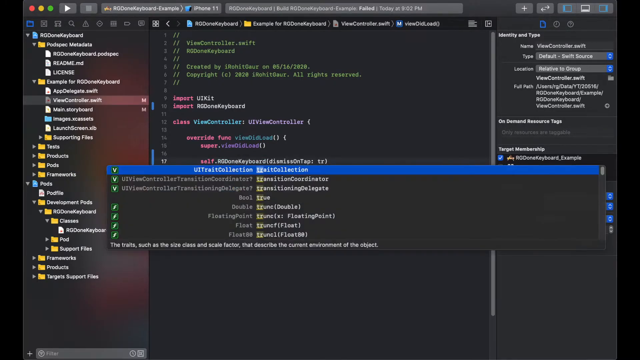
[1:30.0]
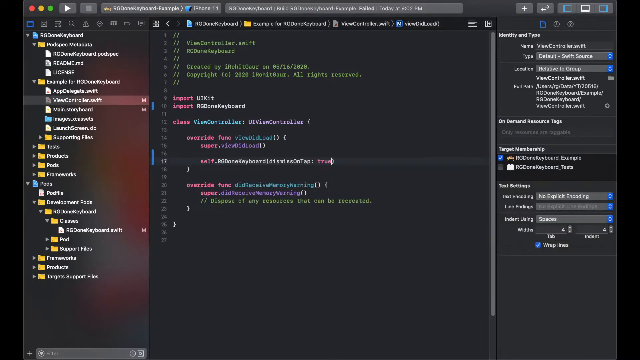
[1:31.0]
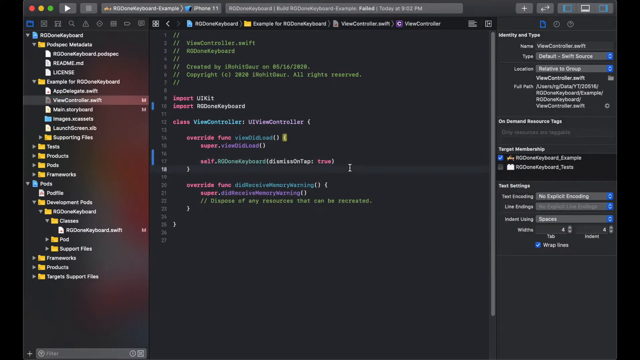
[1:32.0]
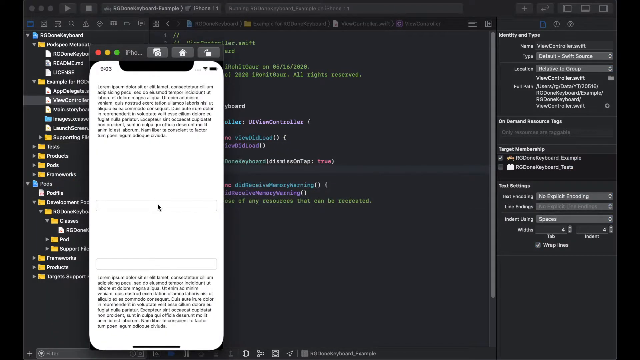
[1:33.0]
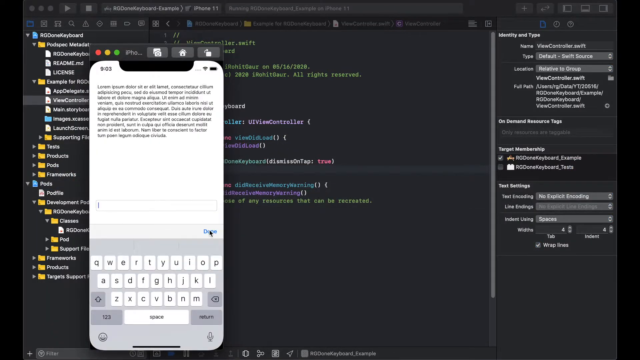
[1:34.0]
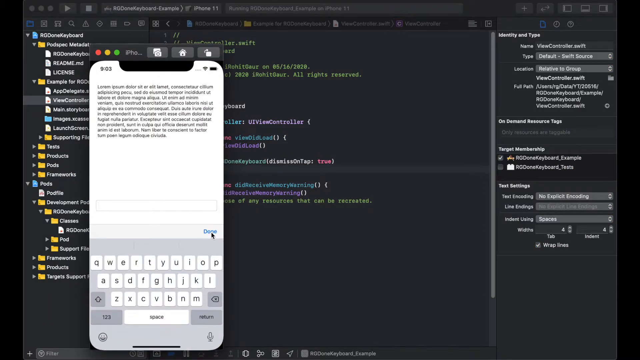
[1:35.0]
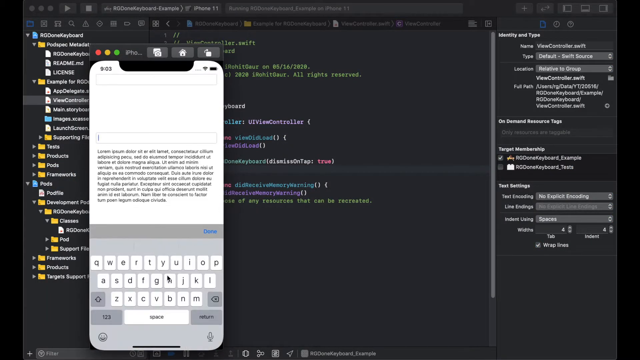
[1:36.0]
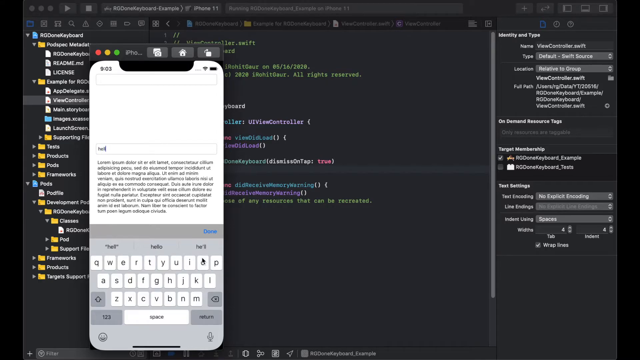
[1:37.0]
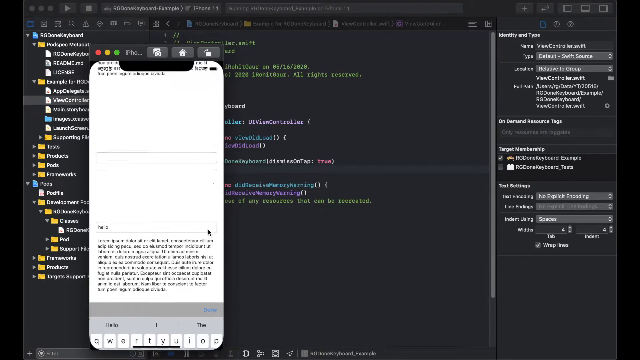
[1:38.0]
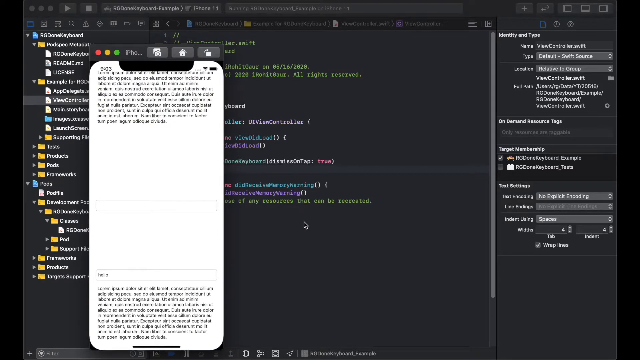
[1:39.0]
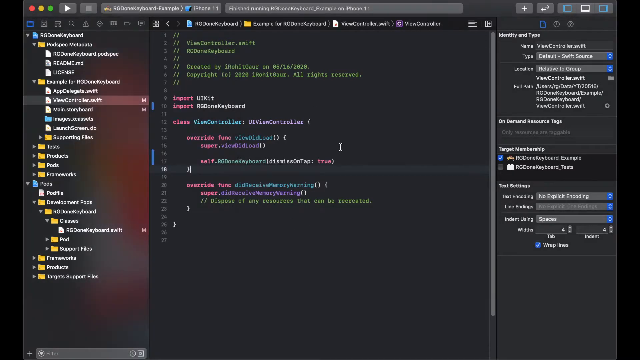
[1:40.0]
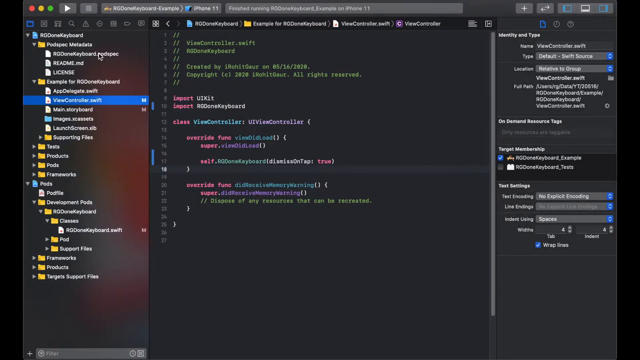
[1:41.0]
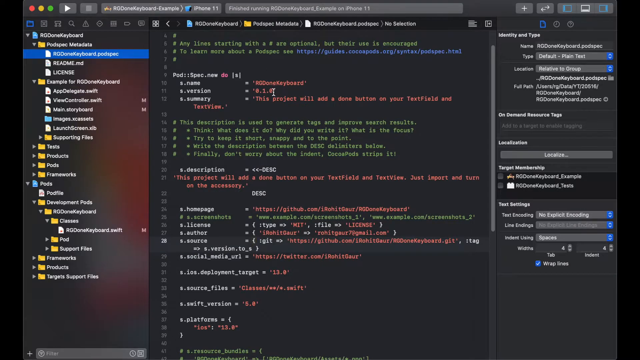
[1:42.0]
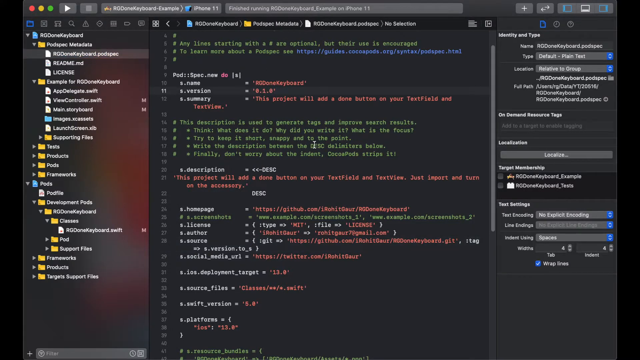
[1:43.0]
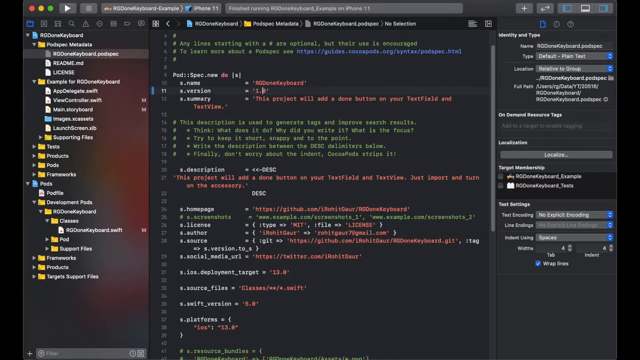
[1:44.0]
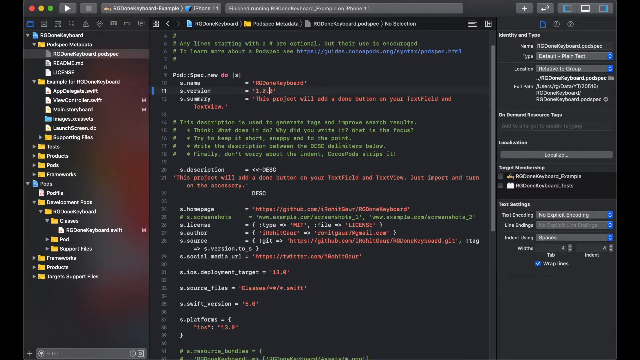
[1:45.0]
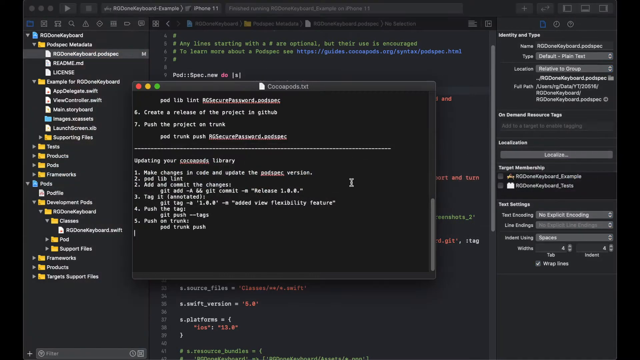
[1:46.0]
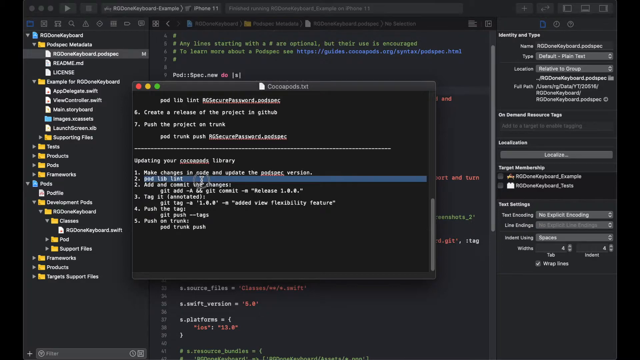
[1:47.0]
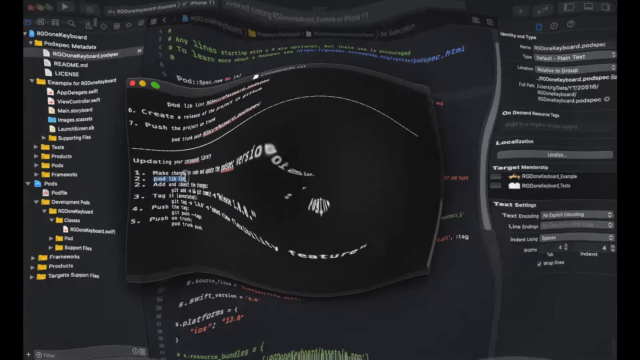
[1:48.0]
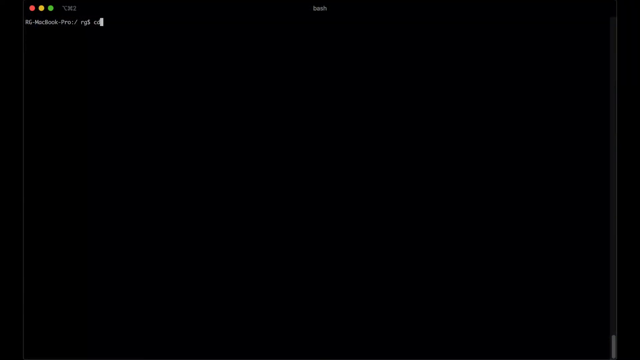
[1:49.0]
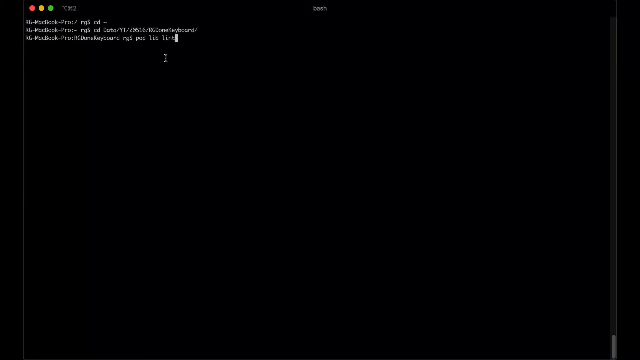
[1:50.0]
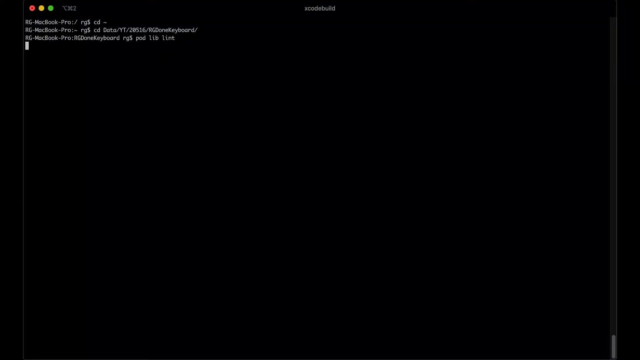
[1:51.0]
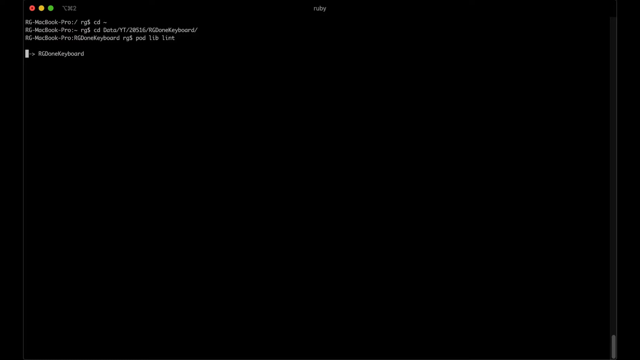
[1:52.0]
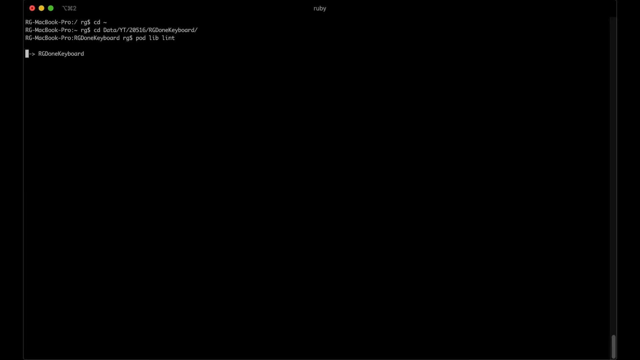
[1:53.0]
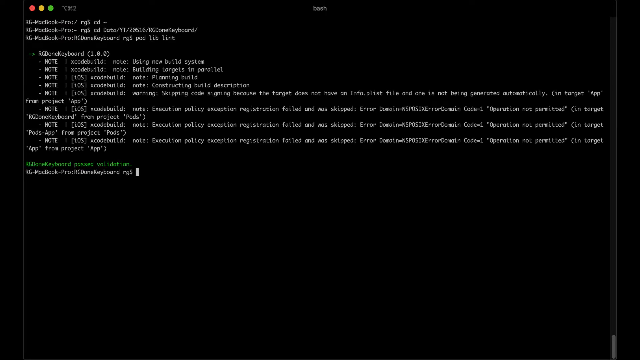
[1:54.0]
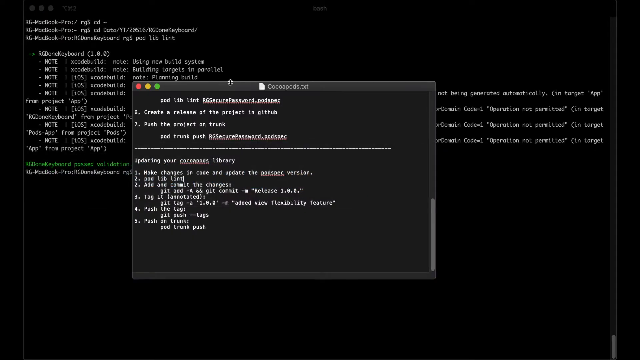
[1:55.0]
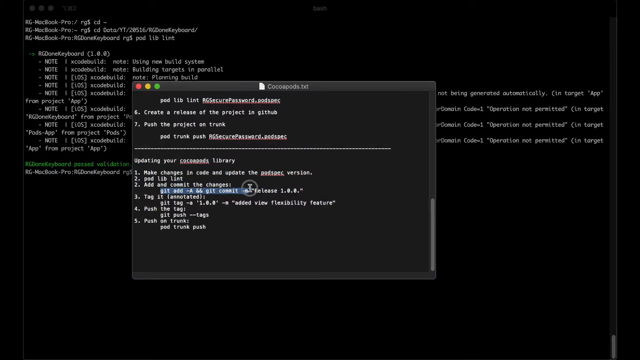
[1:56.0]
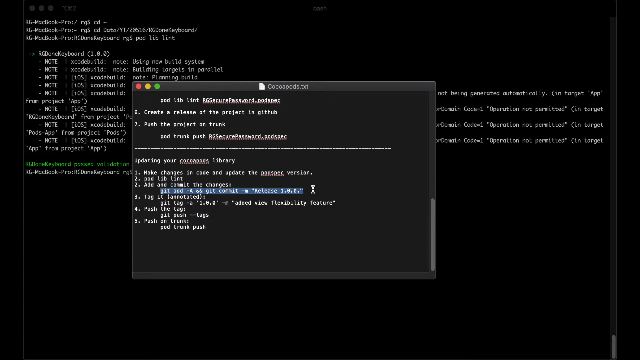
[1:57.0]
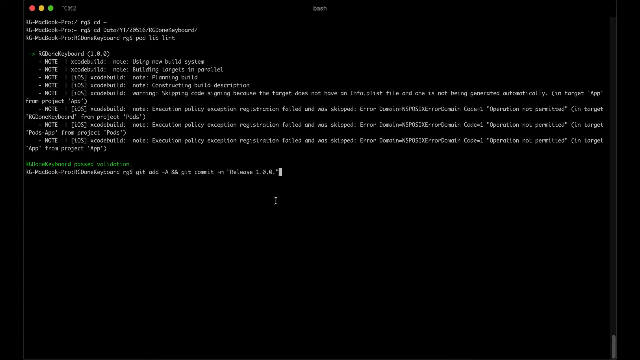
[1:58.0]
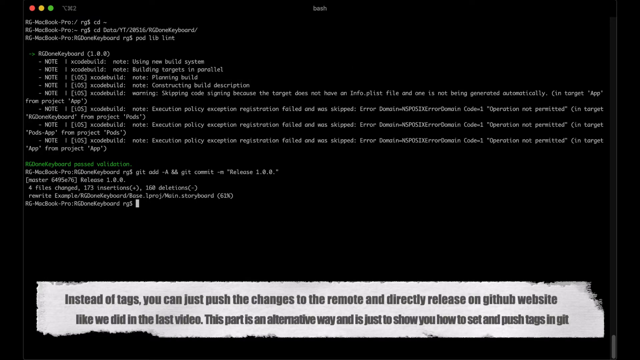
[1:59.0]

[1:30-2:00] The cursor has typed some text into the line of code and a pop-up box shows some options. An option is selected, the mouse clicks around, some menu options come up, and then the phone screen appears on the left-hand side of the page. The cursor moves toward the phone screen and clicks into a text field, bringing up the mobile phone keyboard. The mouse clicks around on the phone keyboard to demonstrate typing on the phone. It then moves to the top of the screen and presses the stop icon button, and the mobile phone screen disappears from the page. An option is selected at the top left of the menu, and the cursor clicks back into the code in the middle of the page. It clicks into a part of the code and starts deleting and then typing text. A menu page briefly pops up and a text file opens. The cursor selects some text and deletes it. A ripple effect goes across the whole screen, it turns black, and then the whole screen becomes the command prompt page, with small writing in white and a few lines of green. Some menu options briefly appear, and then another text box appears. The cursor selects some text, then clicks out of that page back to the command prompt page.